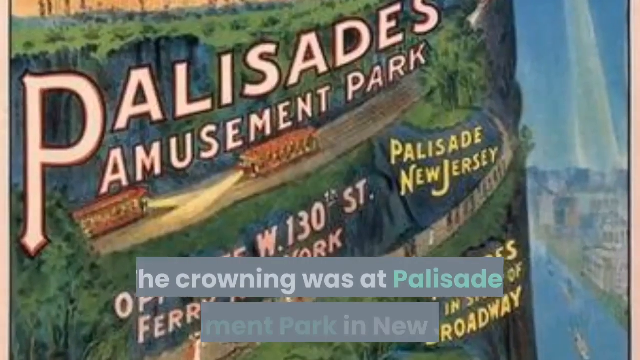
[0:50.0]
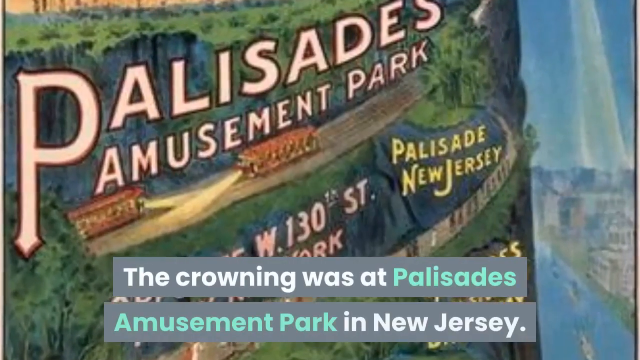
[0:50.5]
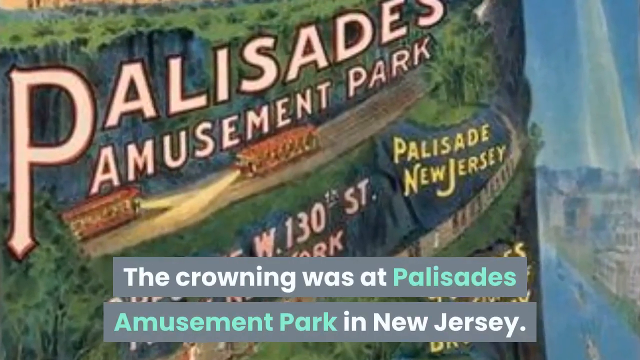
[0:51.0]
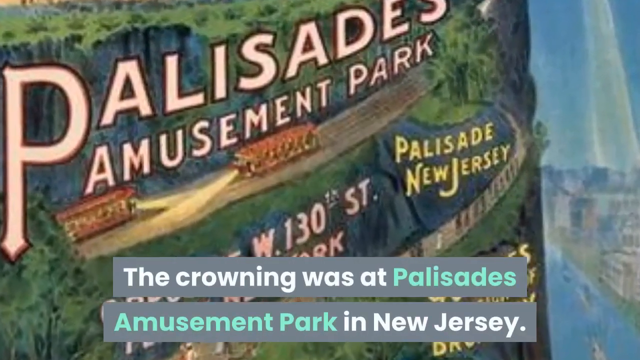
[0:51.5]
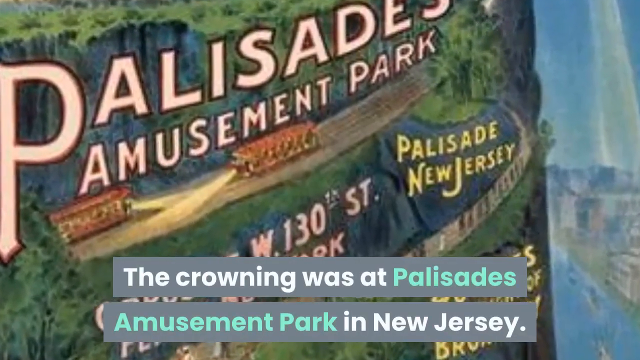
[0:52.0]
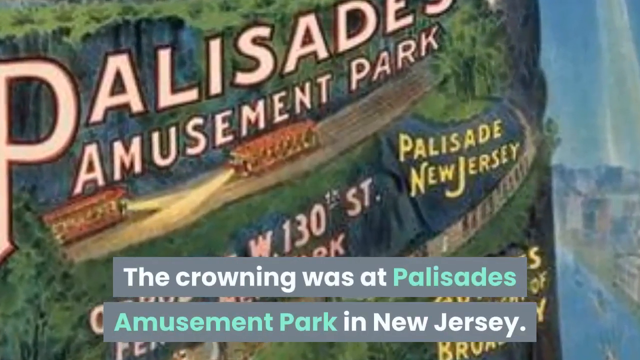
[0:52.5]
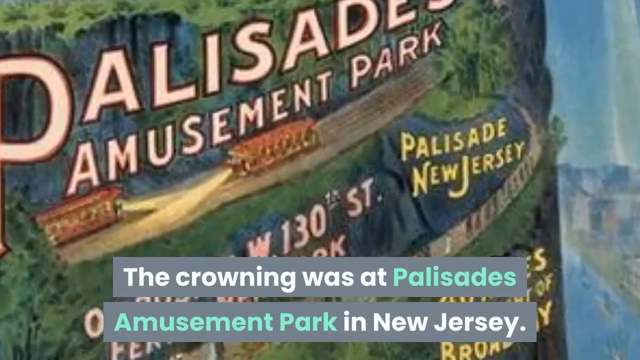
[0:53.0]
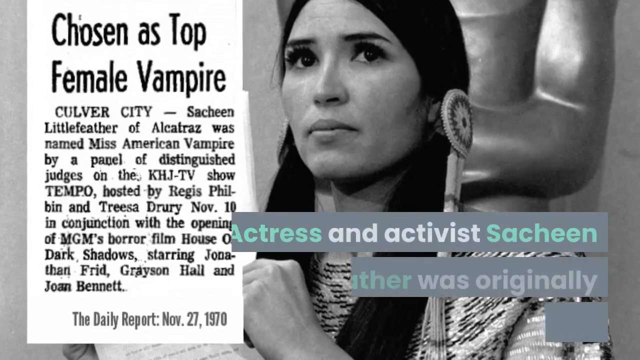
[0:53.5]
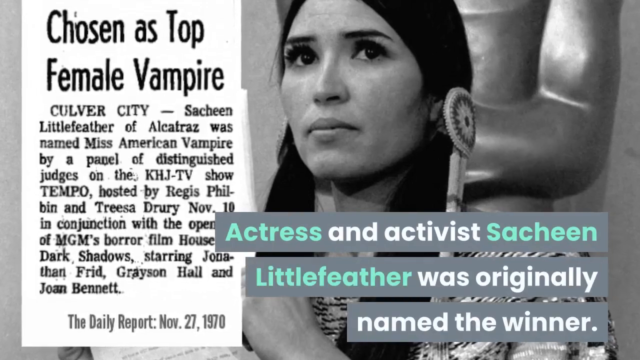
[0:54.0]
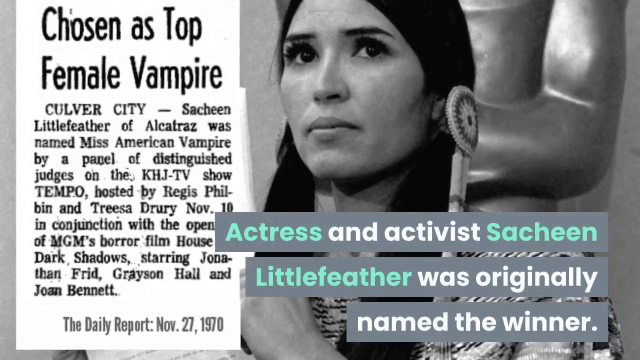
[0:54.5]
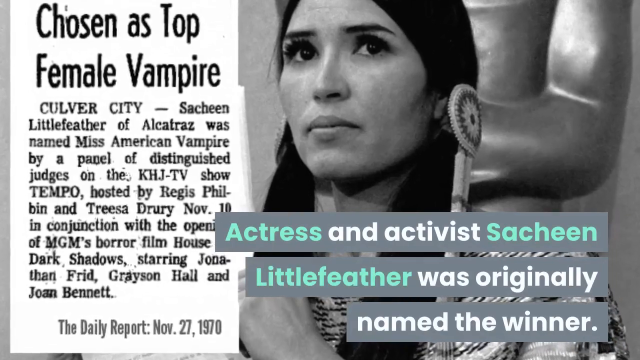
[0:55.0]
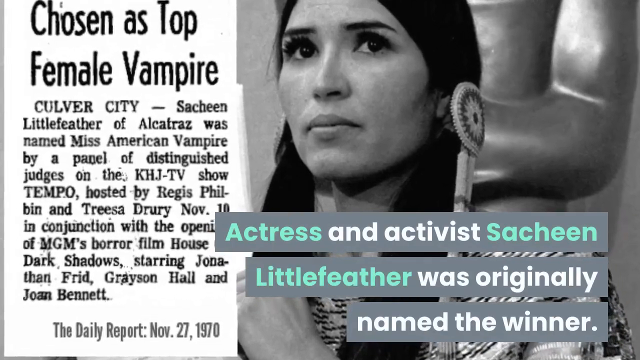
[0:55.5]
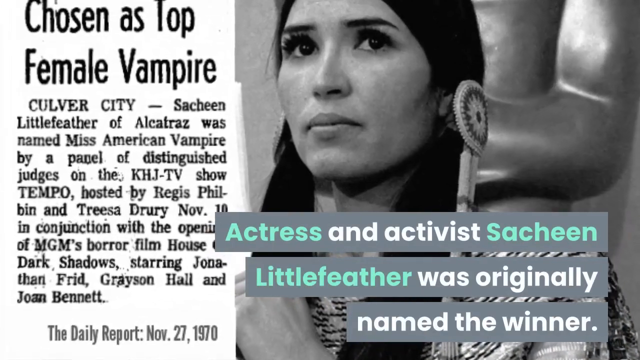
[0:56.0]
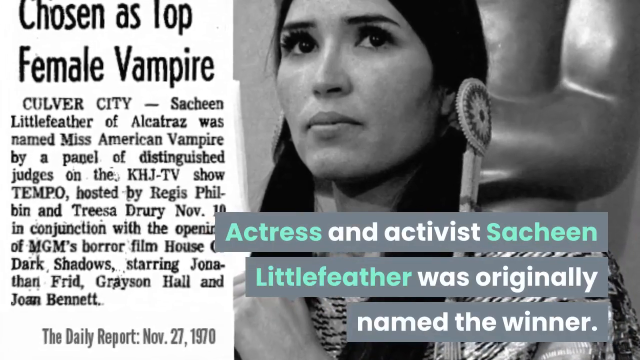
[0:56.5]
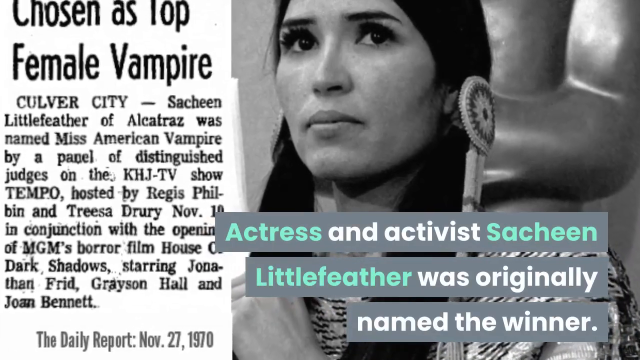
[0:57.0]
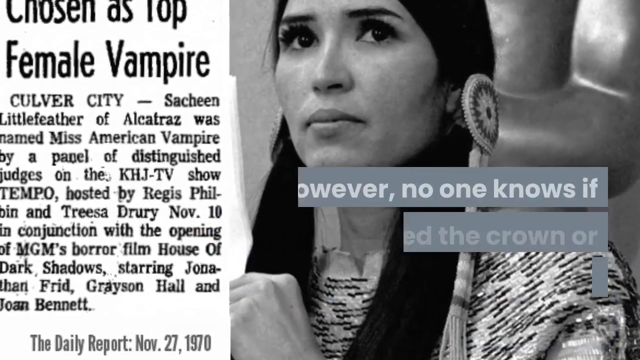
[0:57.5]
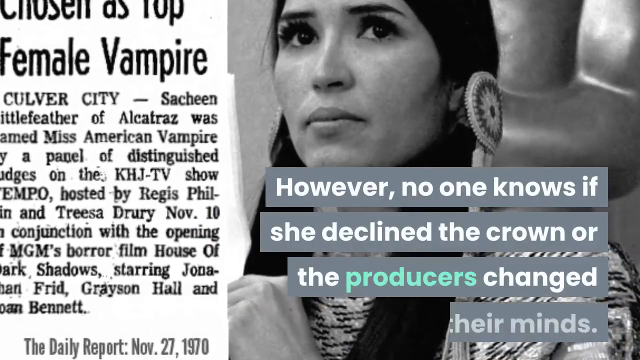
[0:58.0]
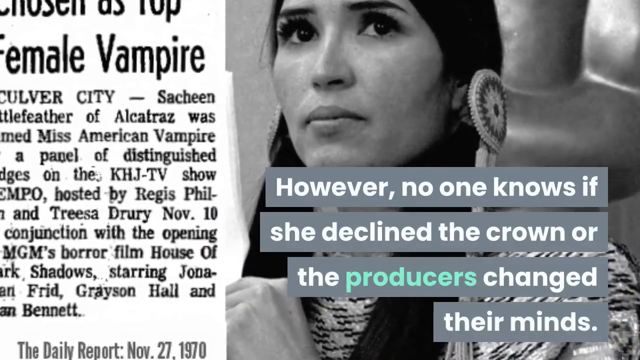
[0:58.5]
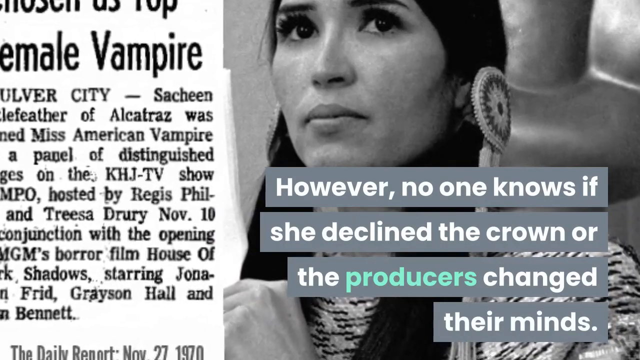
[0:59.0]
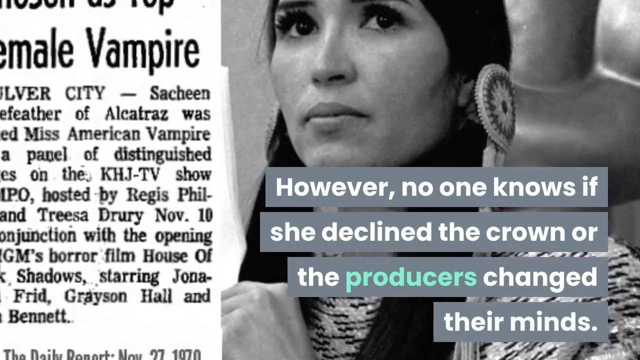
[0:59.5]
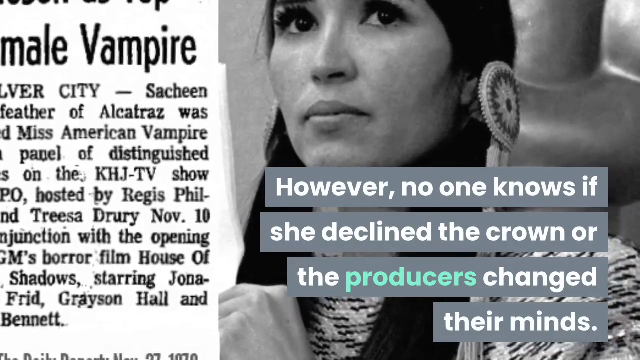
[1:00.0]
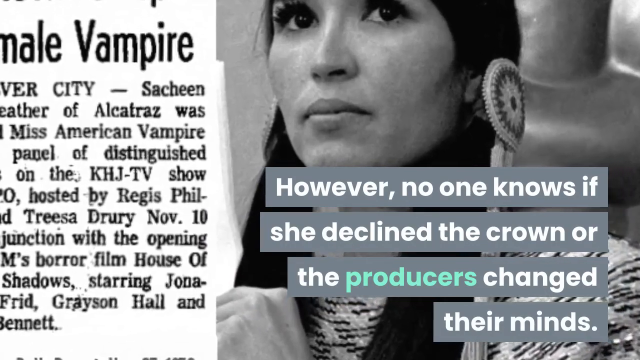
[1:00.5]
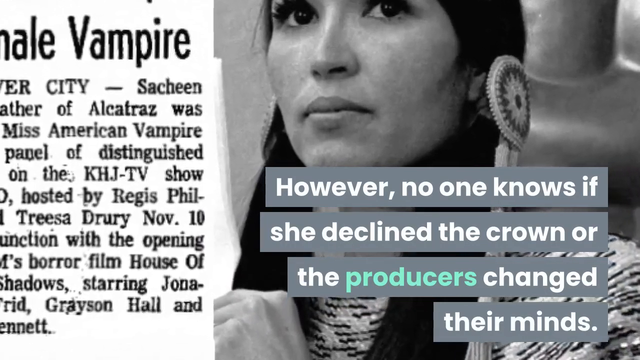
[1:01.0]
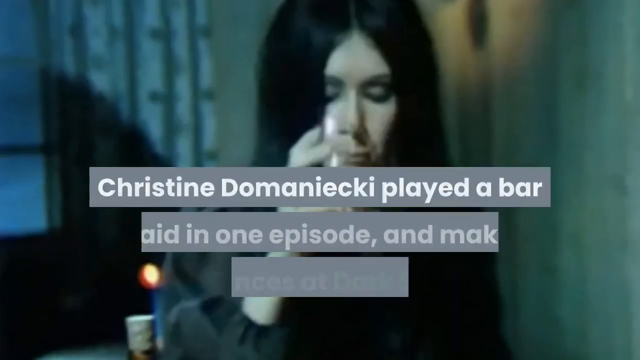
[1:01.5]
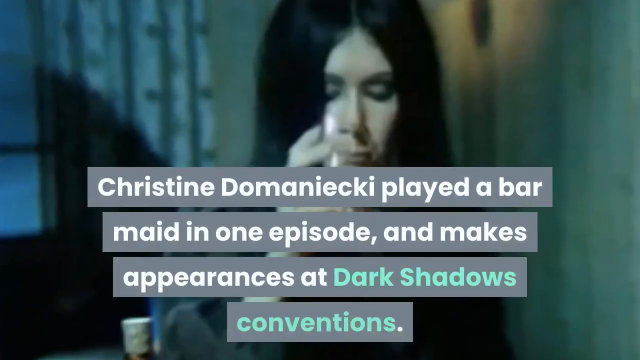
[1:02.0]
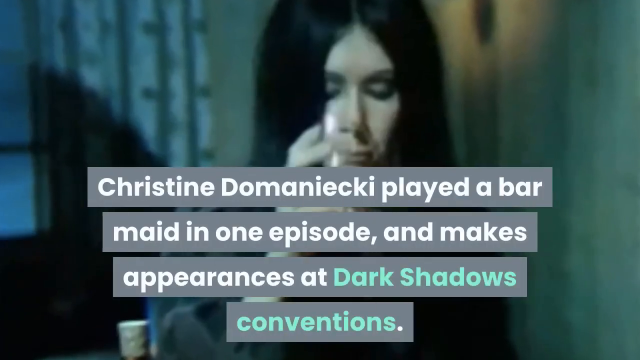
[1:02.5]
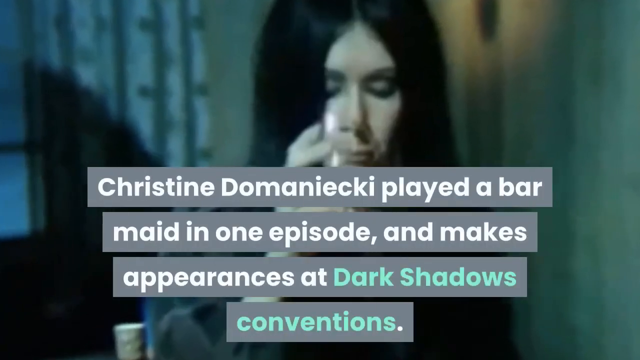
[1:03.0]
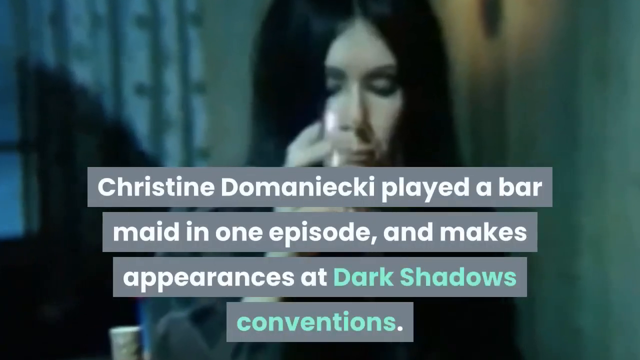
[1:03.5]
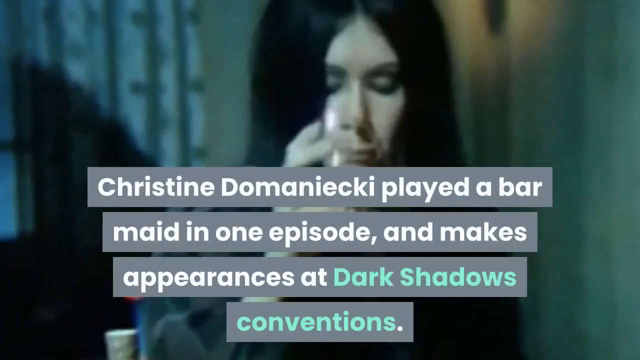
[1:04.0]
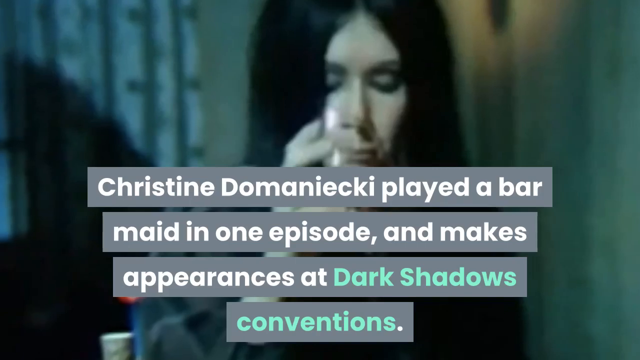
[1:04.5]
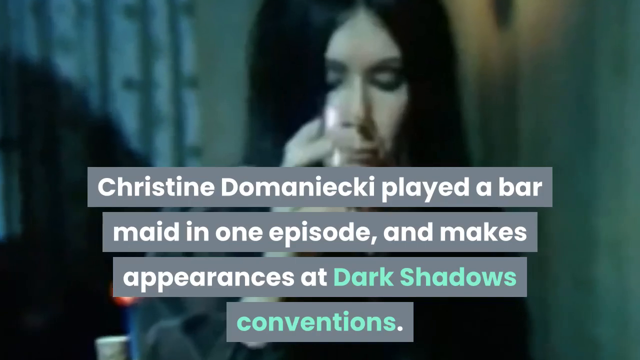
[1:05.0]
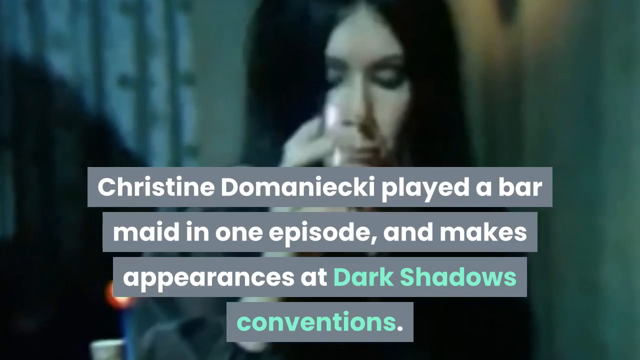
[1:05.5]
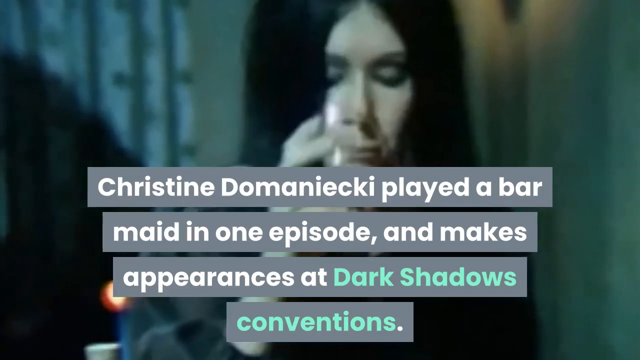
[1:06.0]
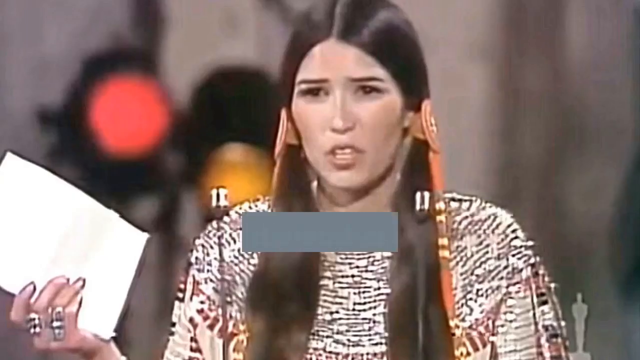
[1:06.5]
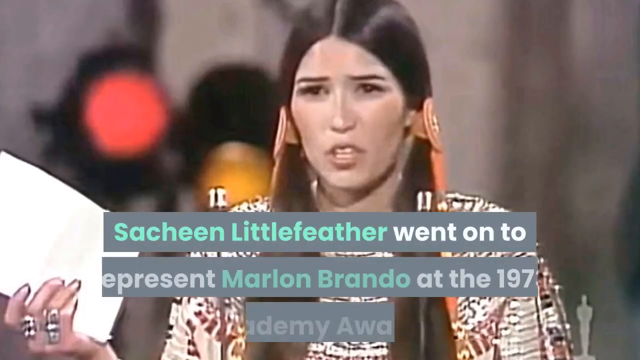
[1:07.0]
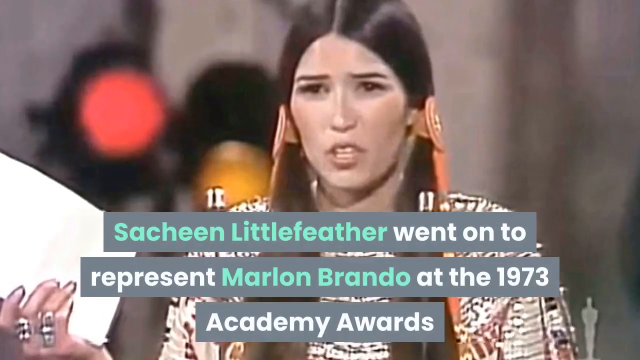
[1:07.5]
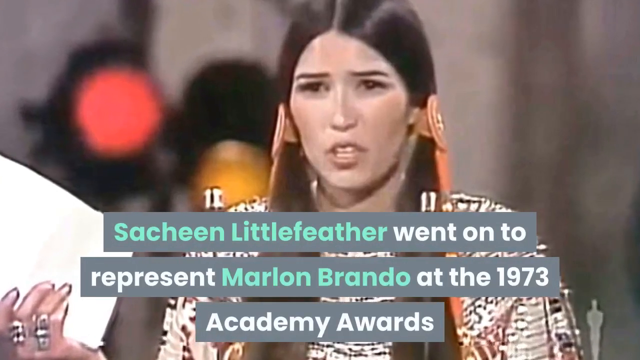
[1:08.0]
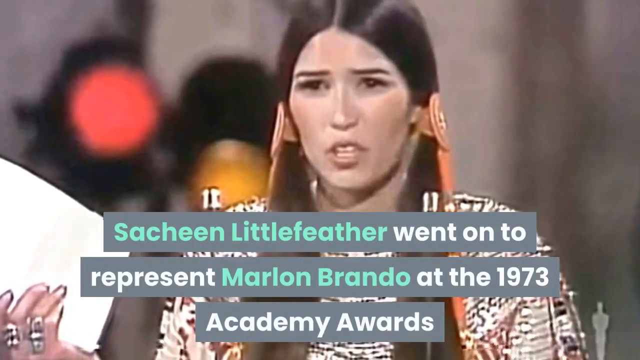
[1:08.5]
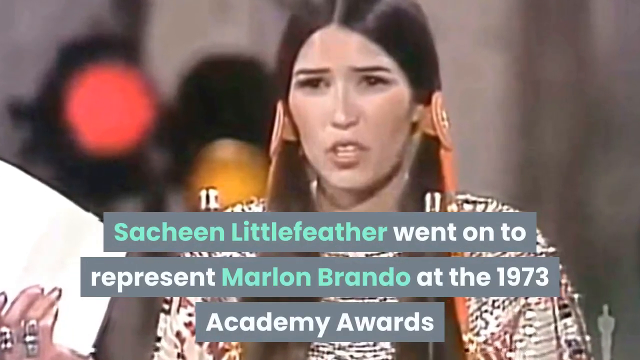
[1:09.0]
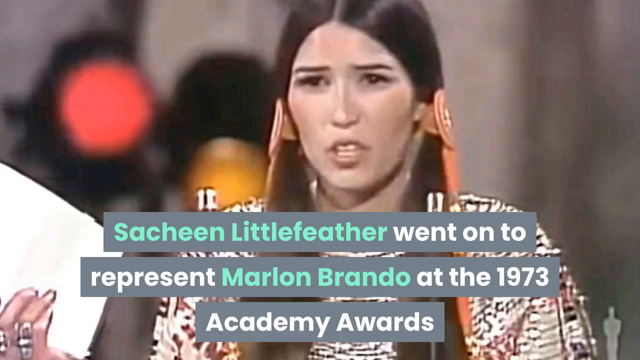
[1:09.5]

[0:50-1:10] A cartoon shows Palisades Amusement Park, with Palisade, New Jersey, and Ferry of New York below it. Text says "The crowning was first introduced at the amusement park in New Jersey" and "no one knows if she declined the crown." Further text reads "Christine Domenechki played a barmaid in one episode and makes appearances at Dark Shadows conventions" and "Sachin Littlefeather went on to represent Marlon Brando at the 1973 Academy Awards." The people shown all look like they have vampire features.